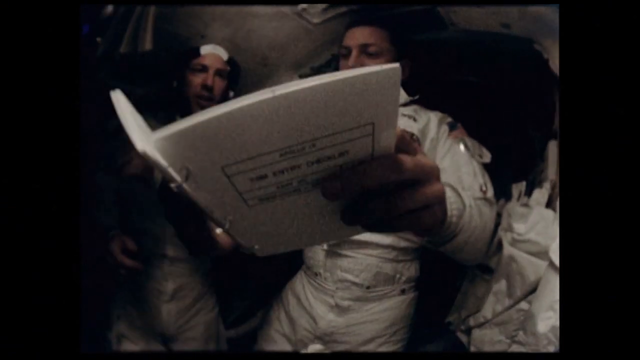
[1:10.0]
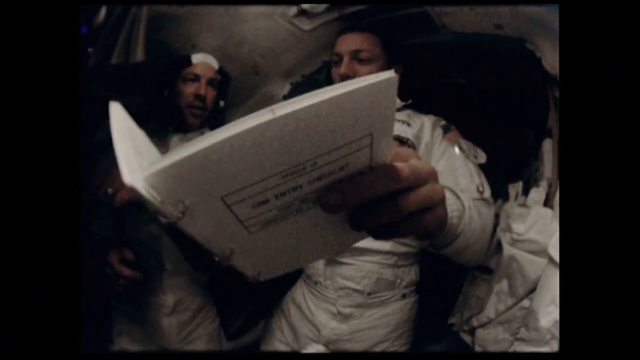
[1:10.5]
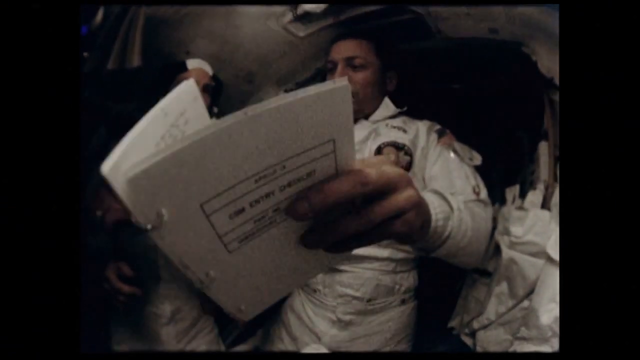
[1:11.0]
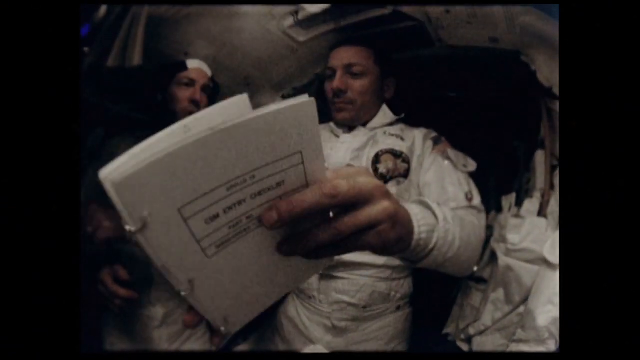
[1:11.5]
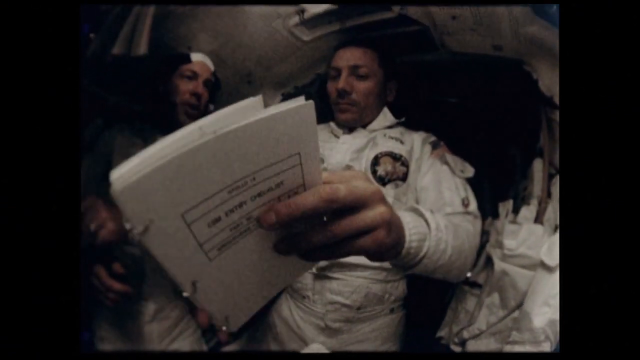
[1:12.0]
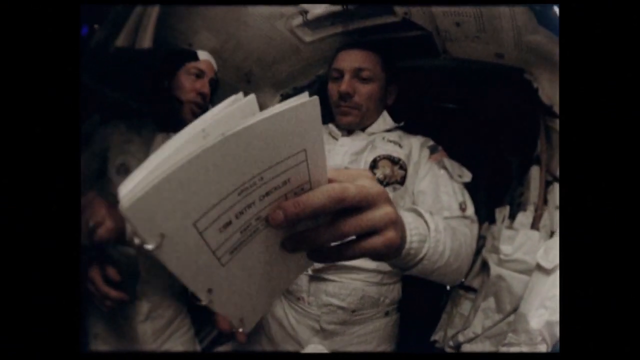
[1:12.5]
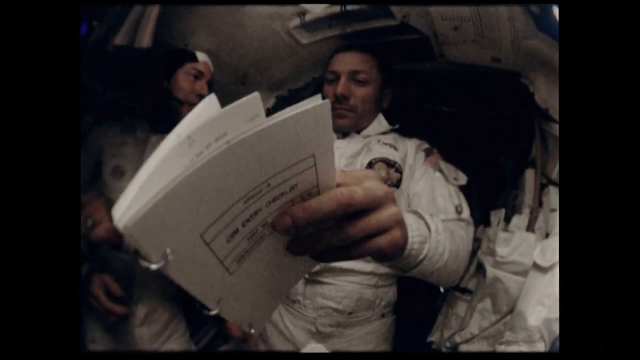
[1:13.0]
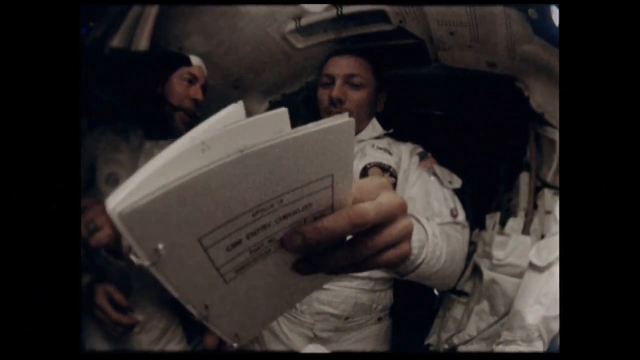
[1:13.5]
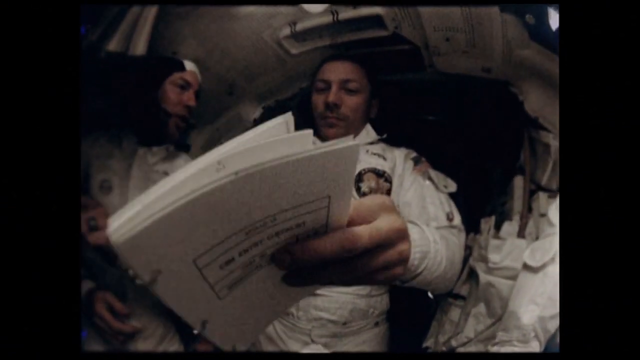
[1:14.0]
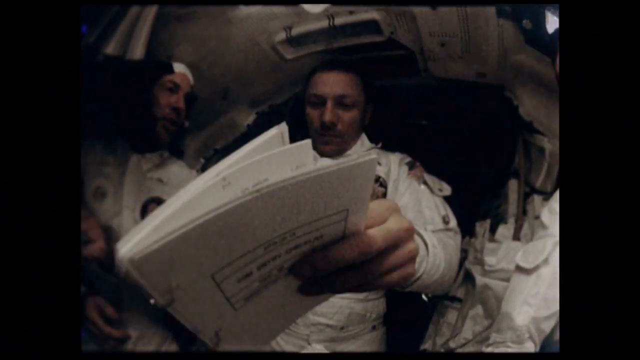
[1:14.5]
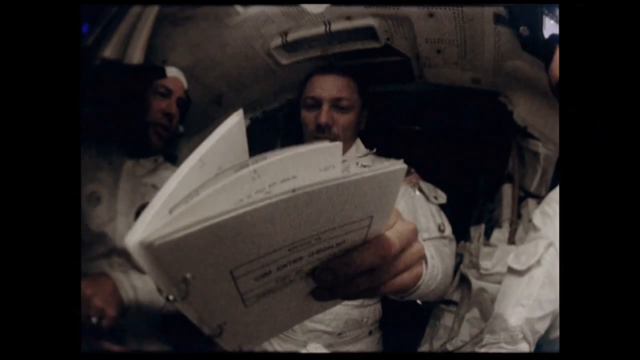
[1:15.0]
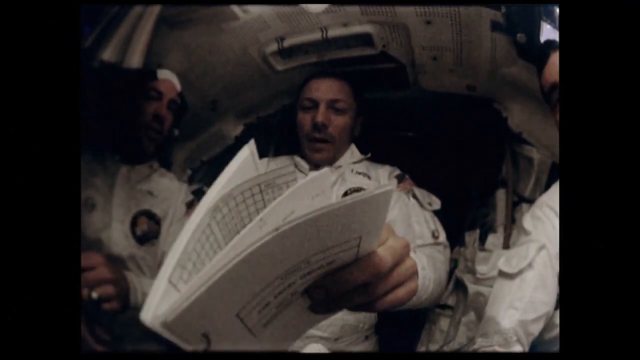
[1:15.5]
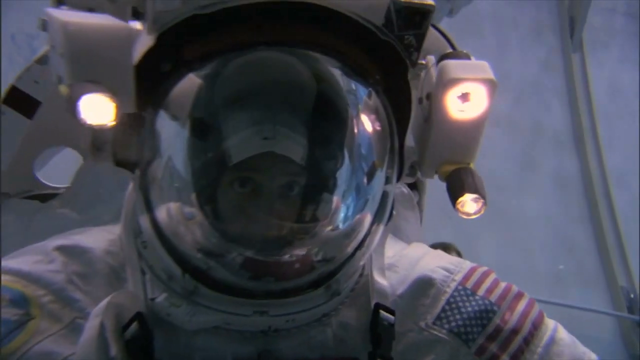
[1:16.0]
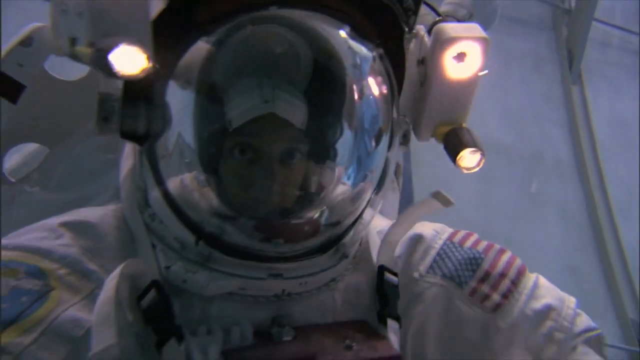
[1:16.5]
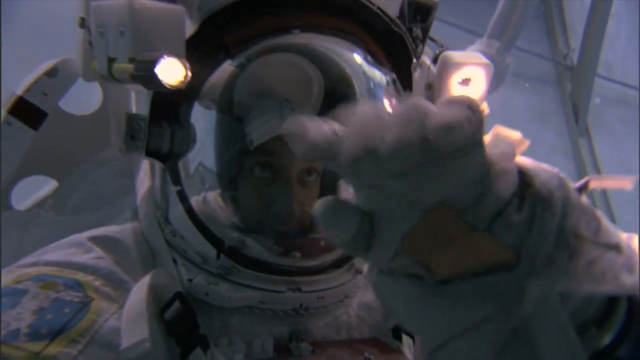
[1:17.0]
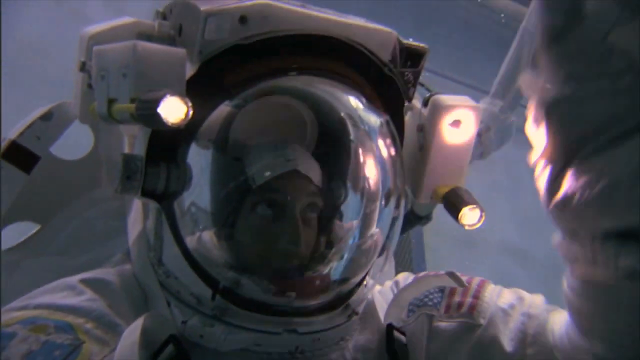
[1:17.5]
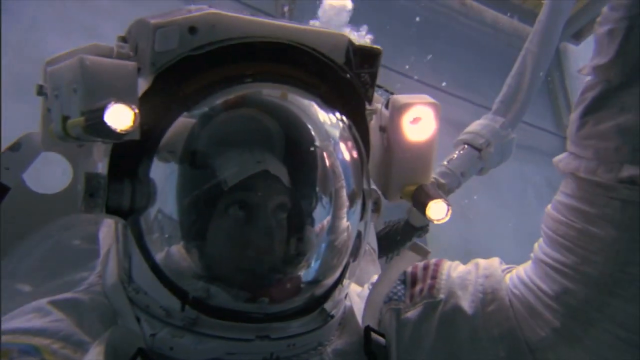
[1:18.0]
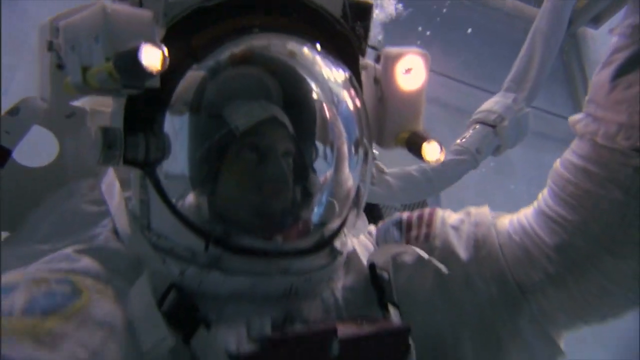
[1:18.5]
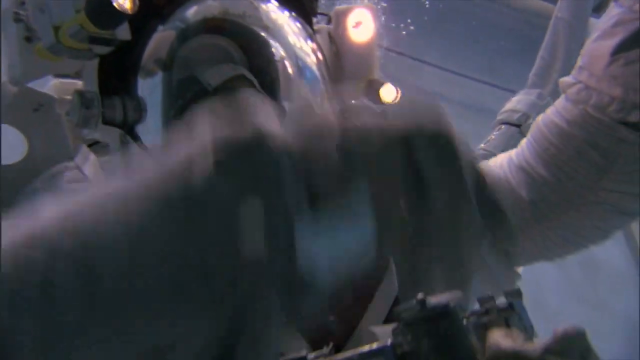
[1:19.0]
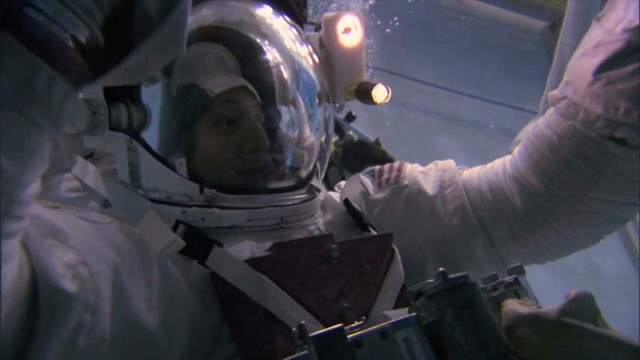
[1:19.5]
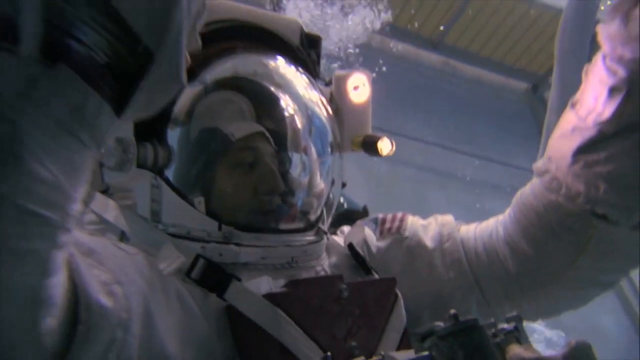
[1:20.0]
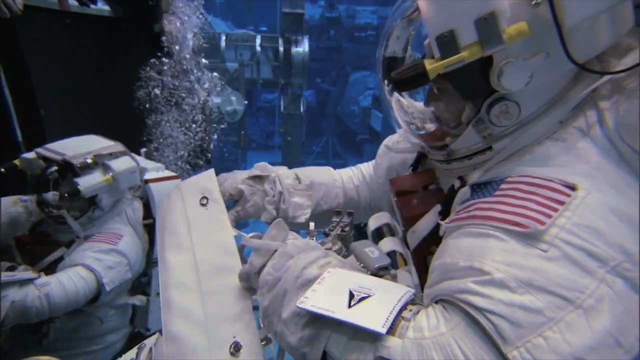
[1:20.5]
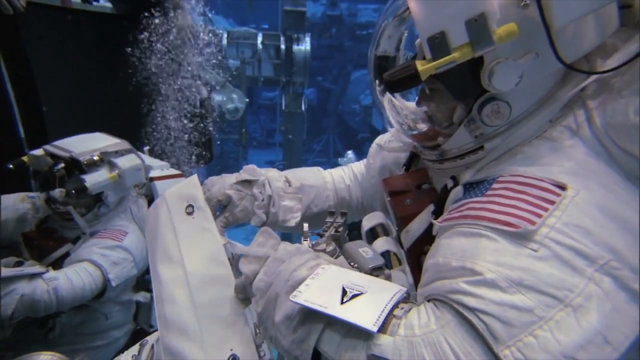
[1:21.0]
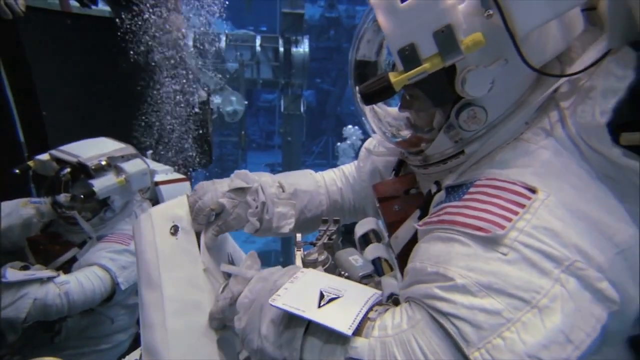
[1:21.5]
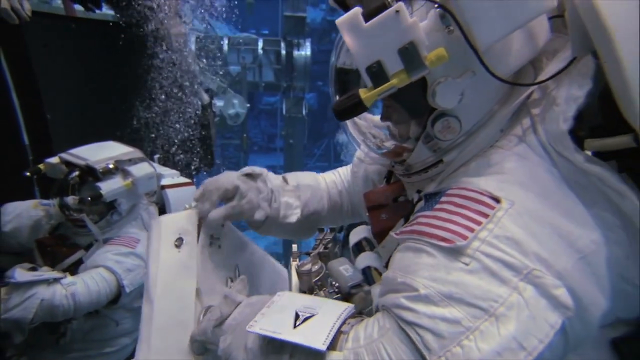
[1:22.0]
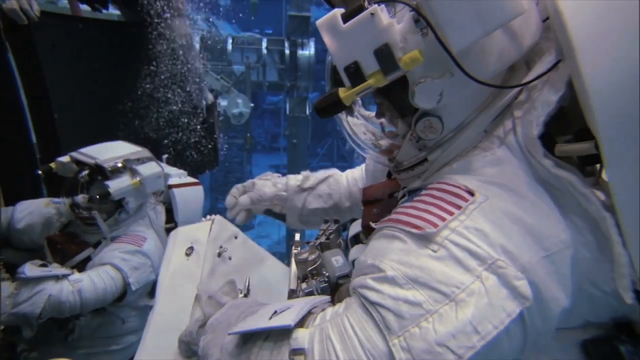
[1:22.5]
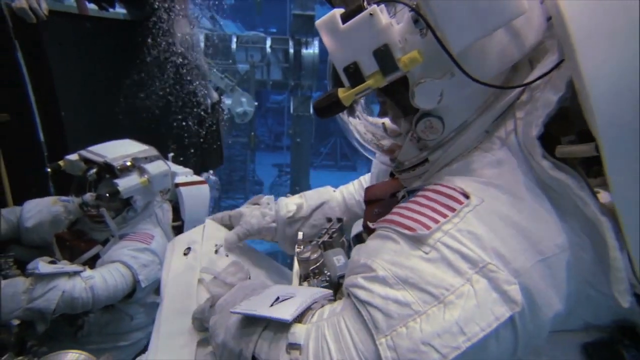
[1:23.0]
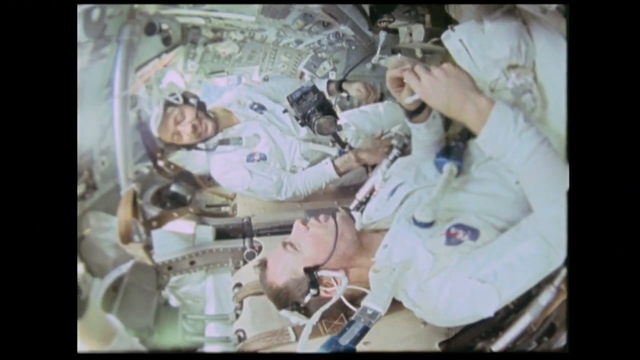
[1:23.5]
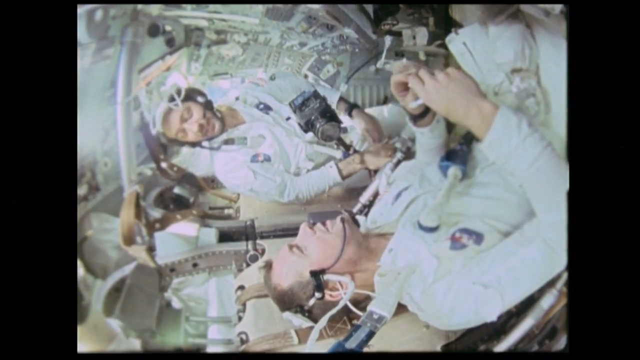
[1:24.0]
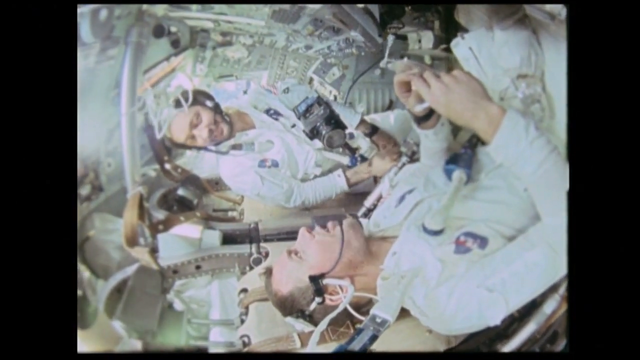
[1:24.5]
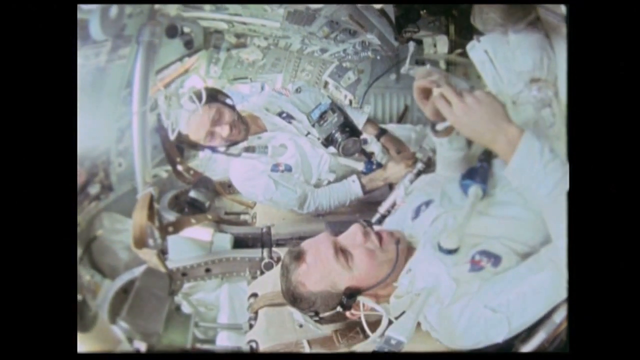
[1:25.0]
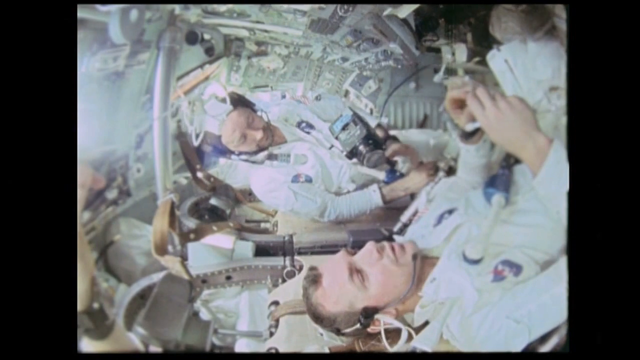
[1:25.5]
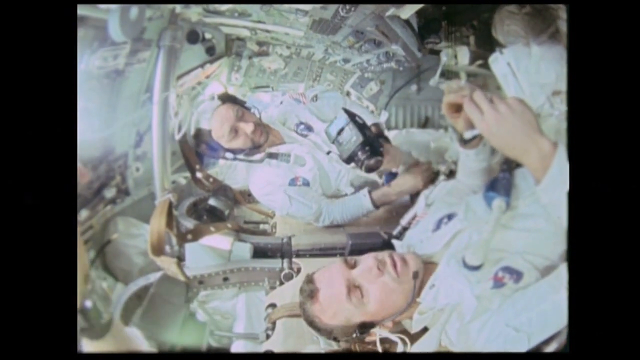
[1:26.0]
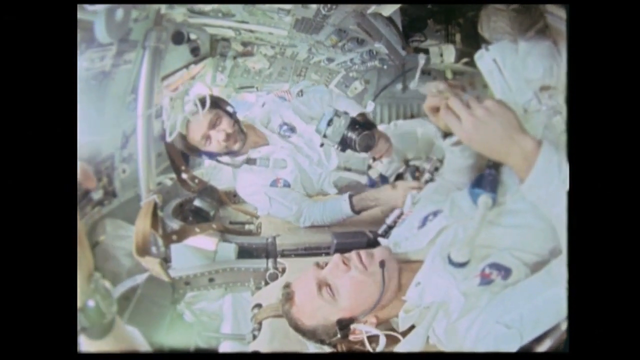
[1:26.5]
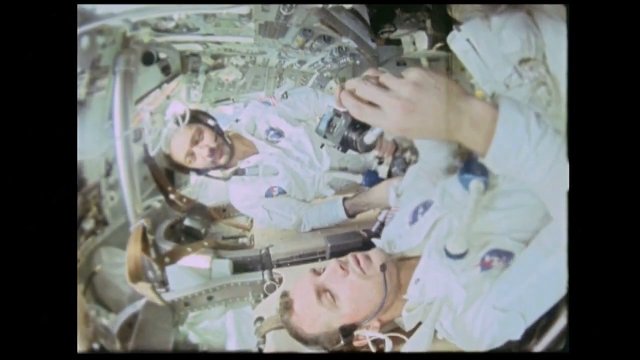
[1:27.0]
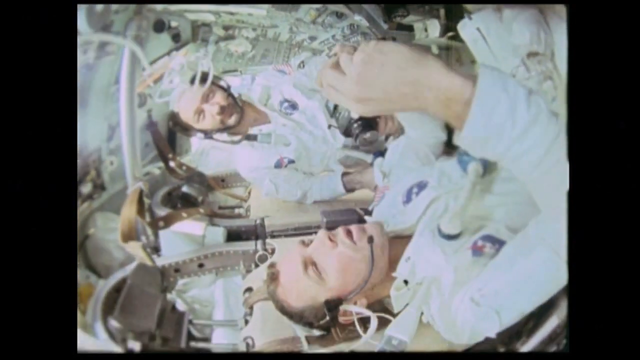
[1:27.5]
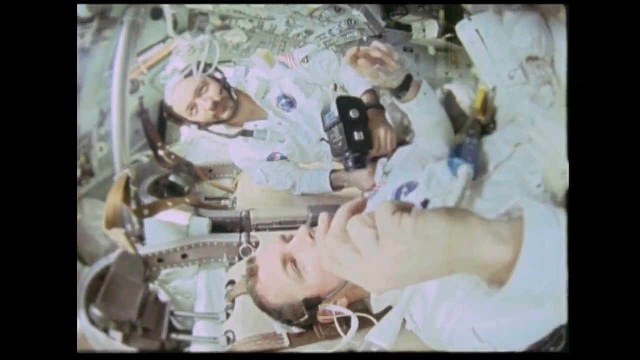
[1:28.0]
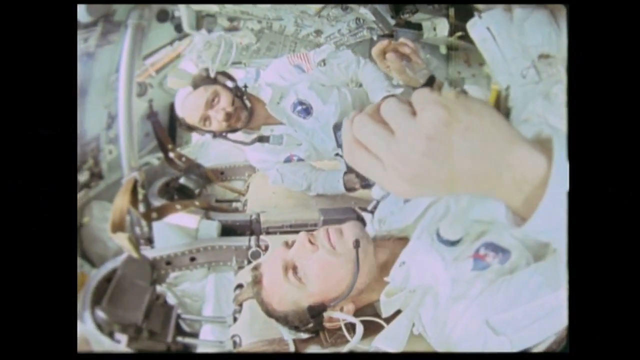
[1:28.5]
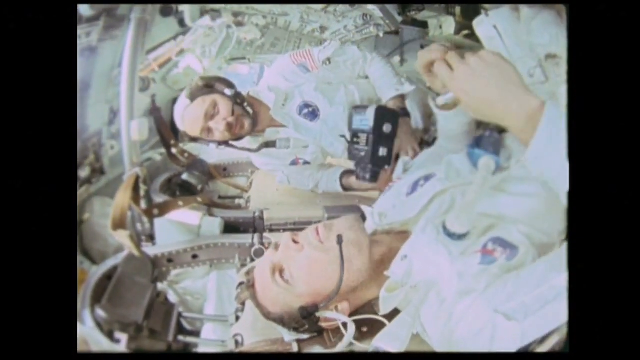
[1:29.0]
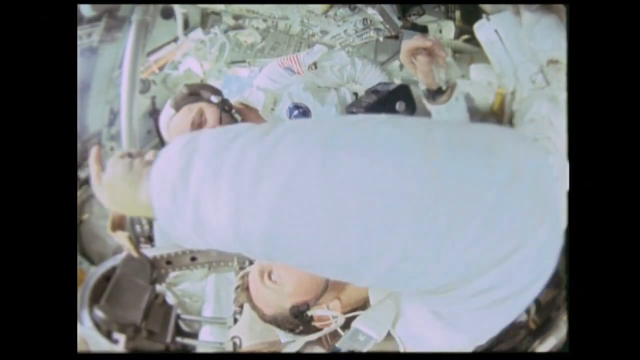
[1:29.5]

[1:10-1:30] An astronaut in a space suit holds a booklet that looks like a bunch of paper, like a manual bound together by spiral rings, with three spiral rings for each hole. He flips through the pages while someone to his right side talks to him. They are inside the spaceship; the background is kind of dark, but it looks to be a spacecraft because of the ceiling. Next is a close-up of the face of a person in a space suit; they appear to be in water or something, since bubbles float out of their oxygen mask, with lots of bubbles coming out of the oxygen tank. Another image shows two astronauts sitting in a spacecraft, talking, with headsets on. One man moves his hand upside down, seemingly trying to find something. He also has a portable camera in his left hand, which looks like a very large camera on a stick. He looks like he is eating something, and something kind of flies out, like a little cube of cheese or something.